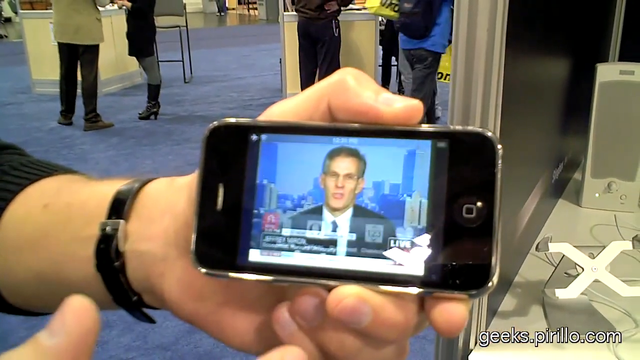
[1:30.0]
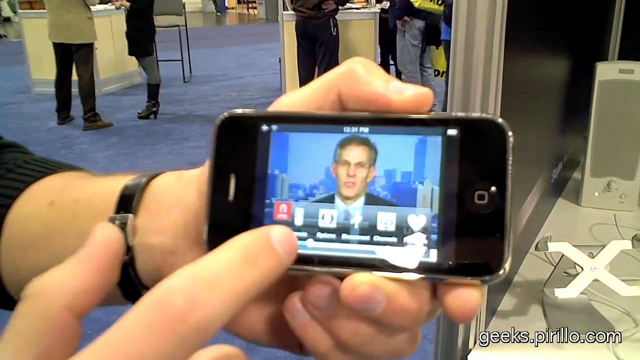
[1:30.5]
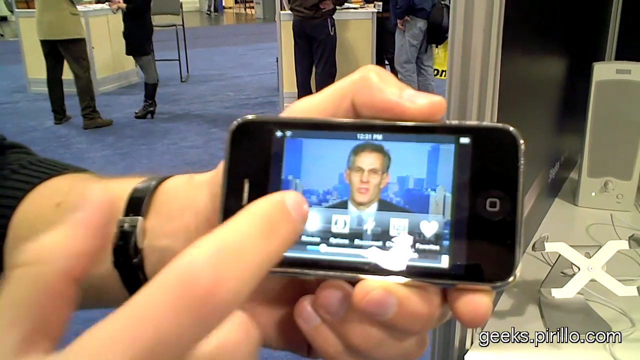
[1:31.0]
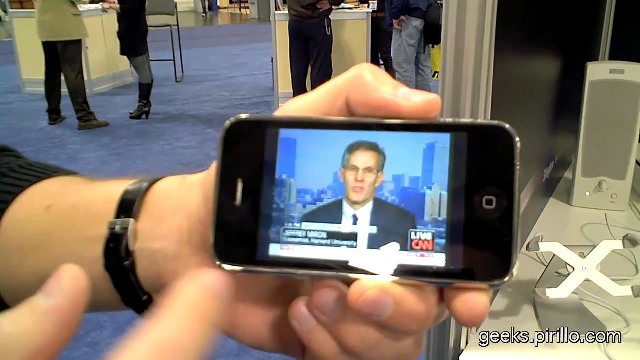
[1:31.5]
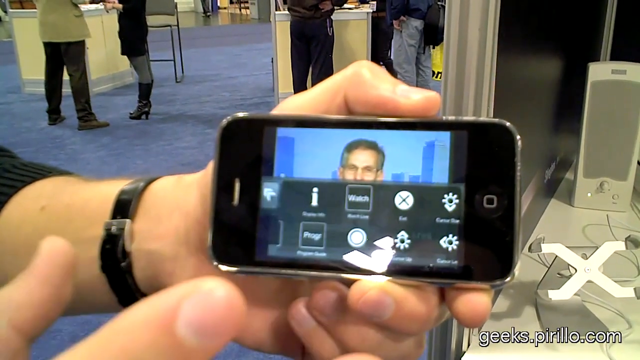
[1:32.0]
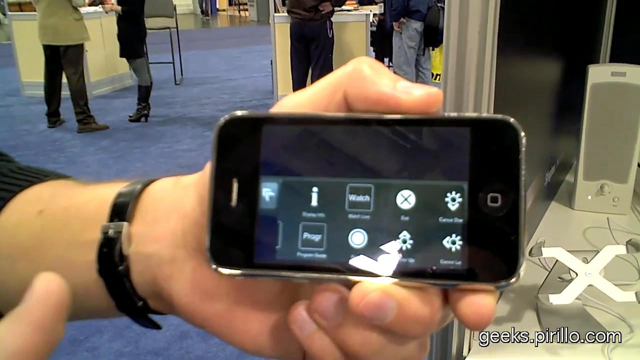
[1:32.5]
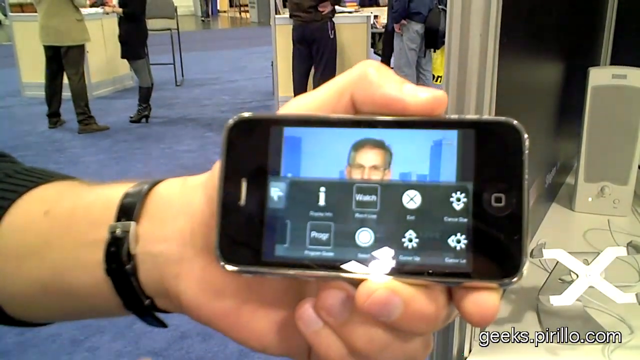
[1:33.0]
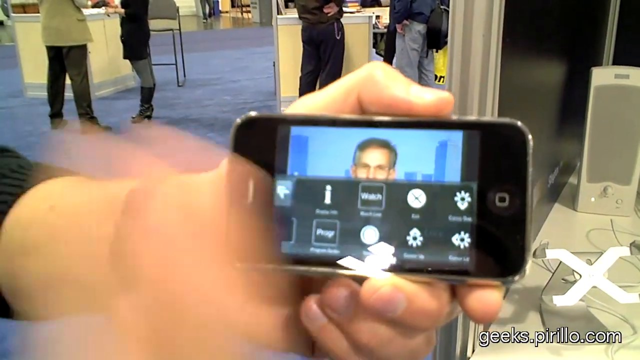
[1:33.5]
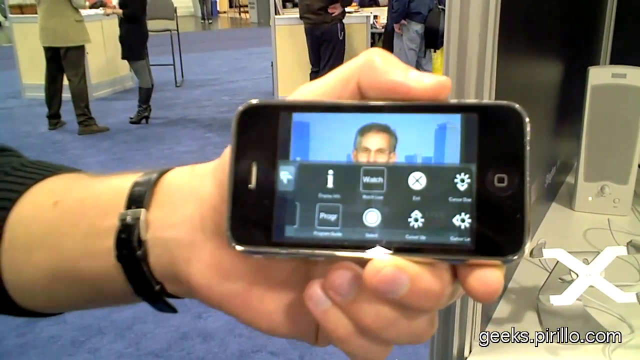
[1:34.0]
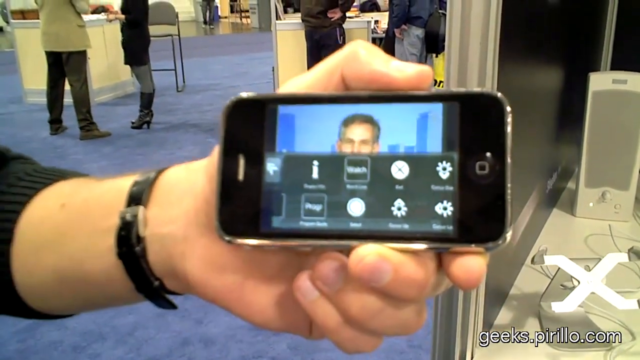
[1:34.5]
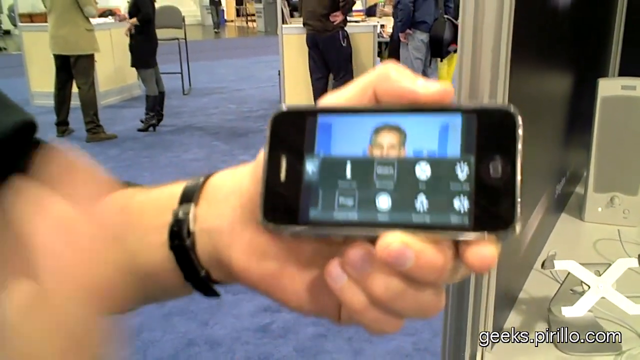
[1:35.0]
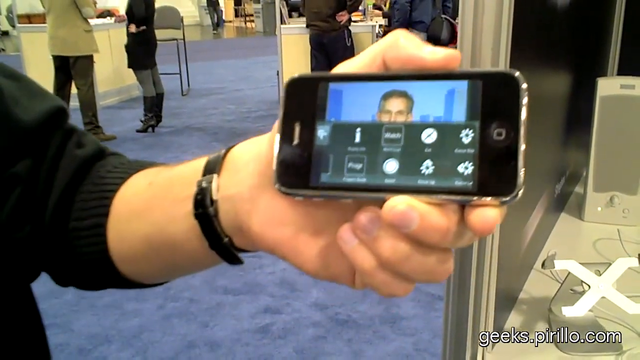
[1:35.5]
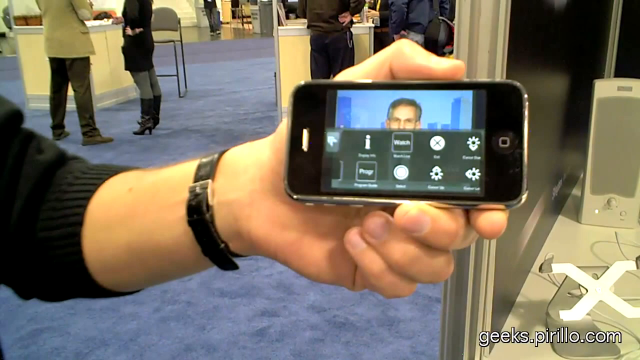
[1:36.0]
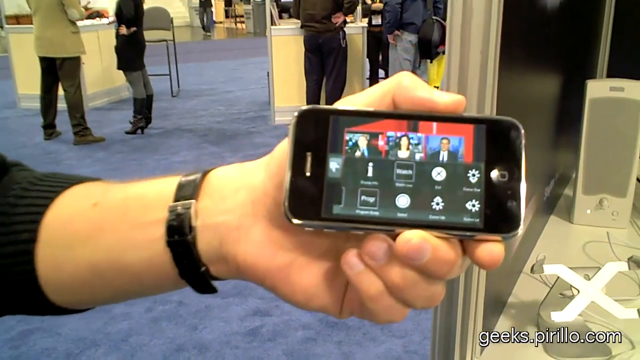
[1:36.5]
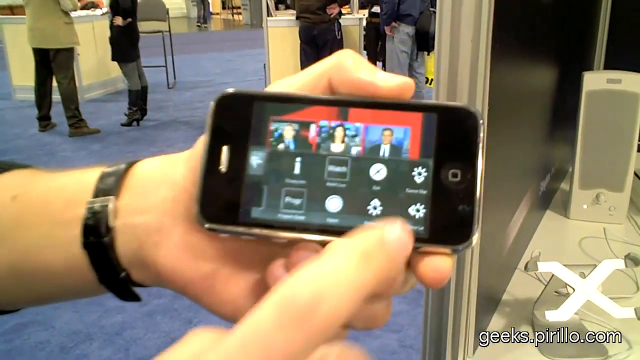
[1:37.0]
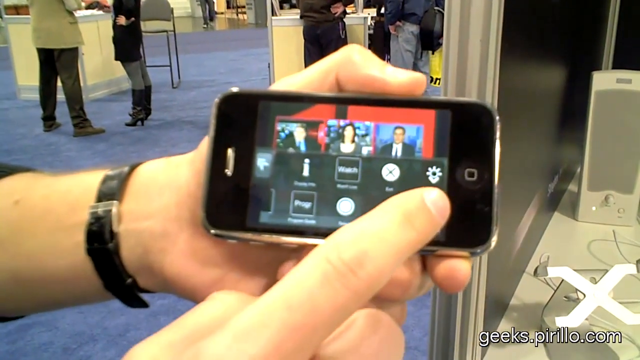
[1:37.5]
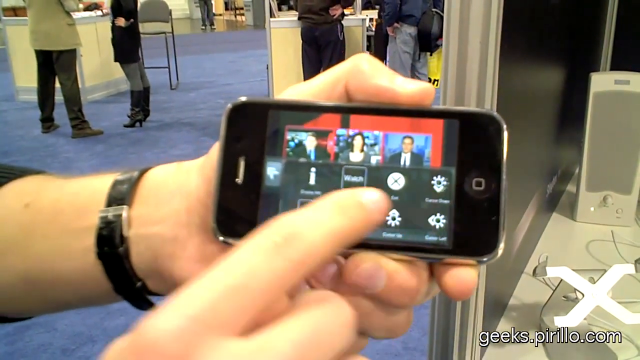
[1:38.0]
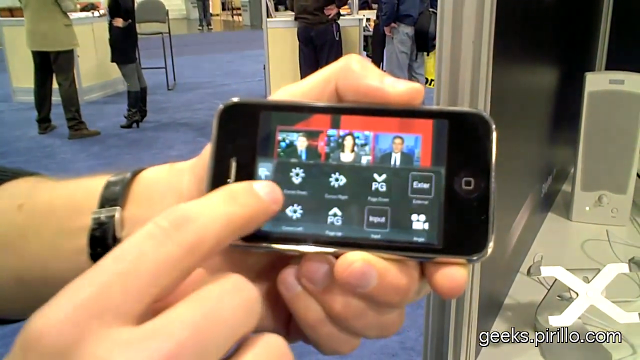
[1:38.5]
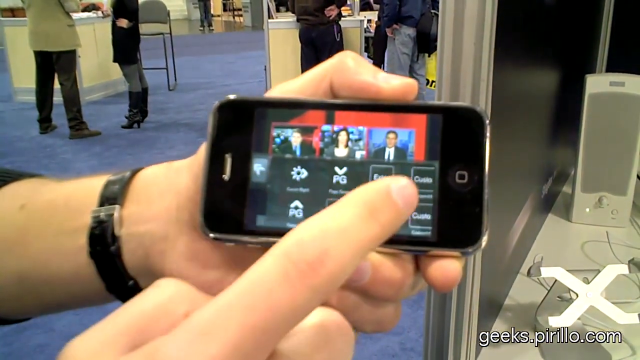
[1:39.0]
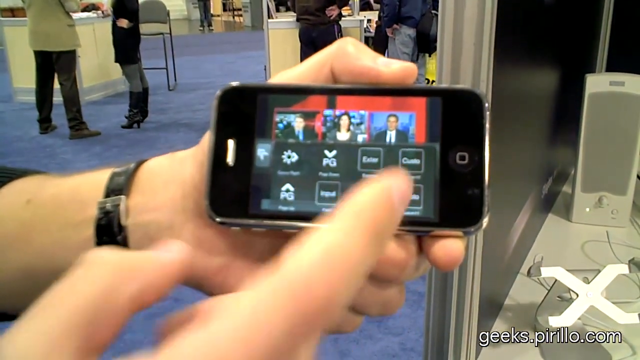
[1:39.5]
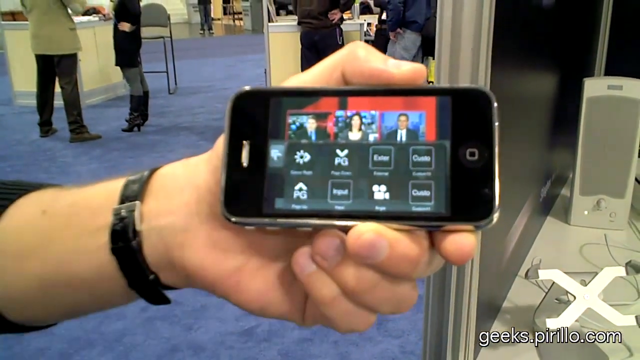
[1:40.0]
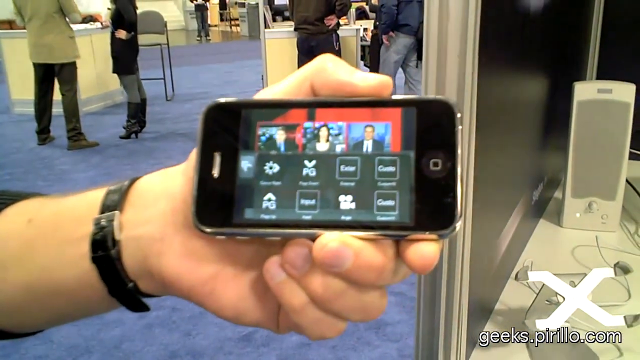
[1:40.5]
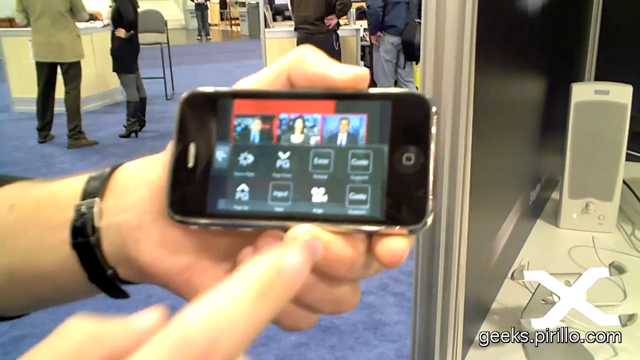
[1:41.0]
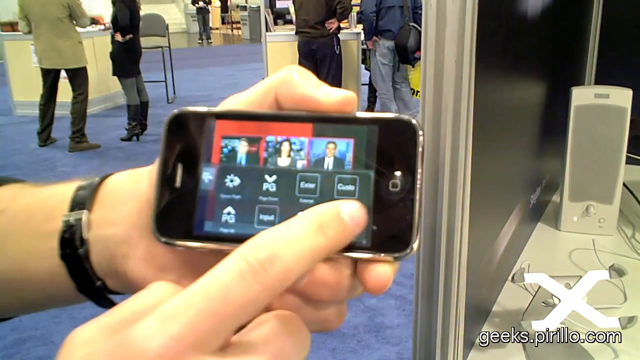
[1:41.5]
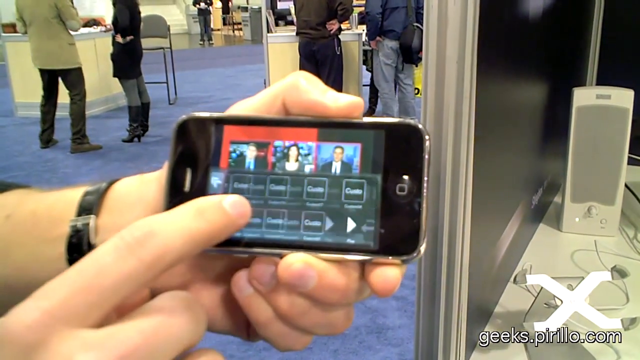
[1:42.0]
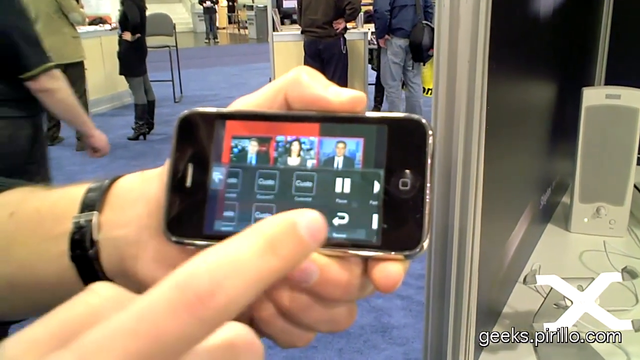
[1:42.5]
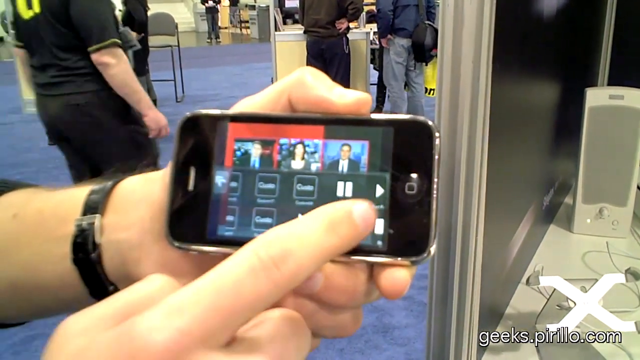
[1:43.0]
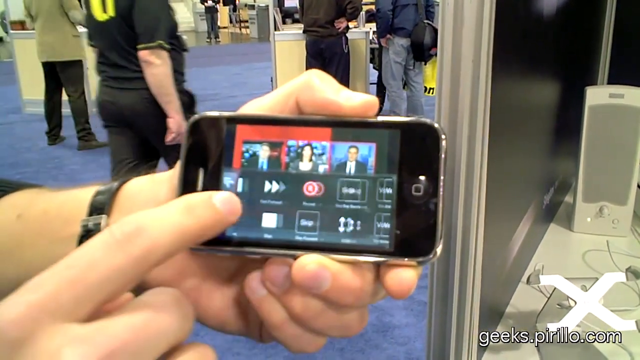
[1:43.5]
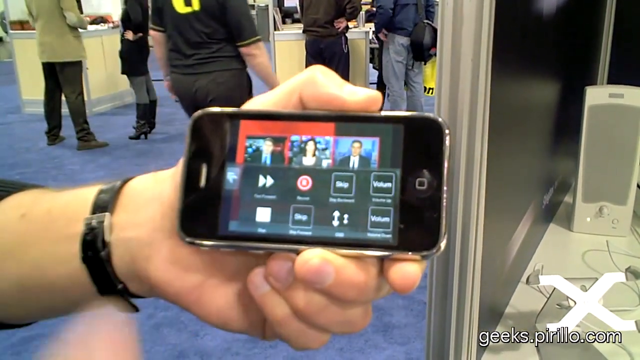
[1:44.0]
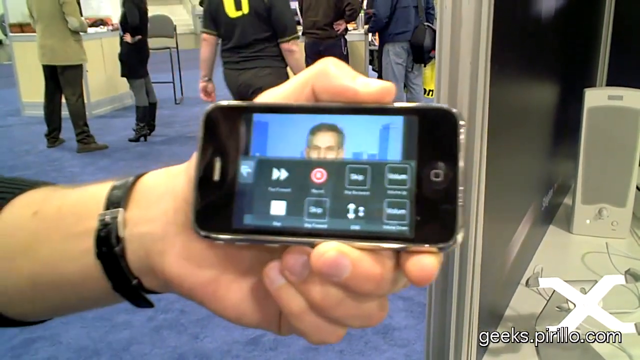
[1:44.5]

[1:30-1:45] The same horizontally held iPhone shows a CNN news broadcast. The man taps the screen and a submenu comes out from the left-hand side. His right hand gestures at the TV as he seems to explain something. He swipes to show the different options in the left-hand submenu, including different configurations, channels or objects, and commands. A TV rating is visible, along with pause, play, rewind, and fast-forward controls.